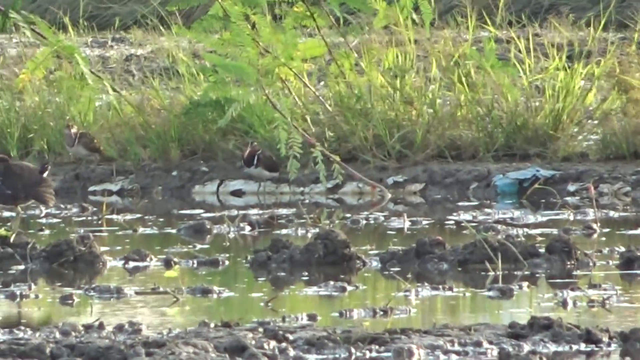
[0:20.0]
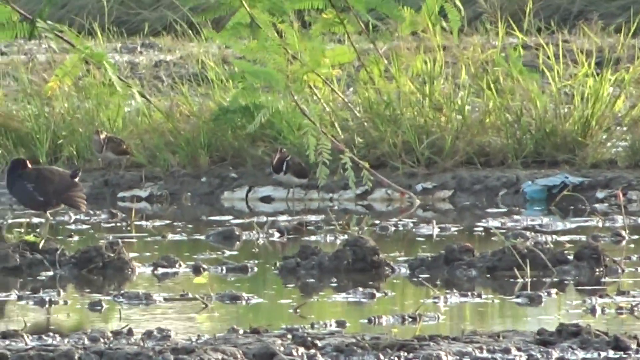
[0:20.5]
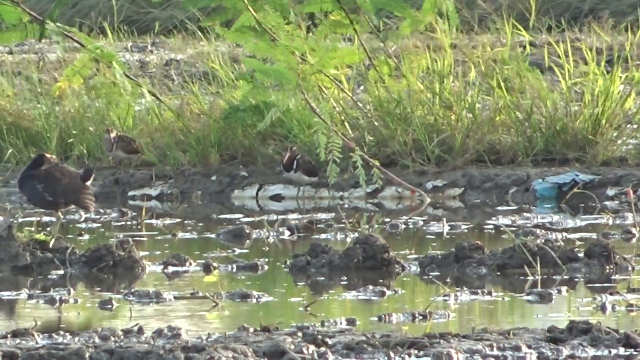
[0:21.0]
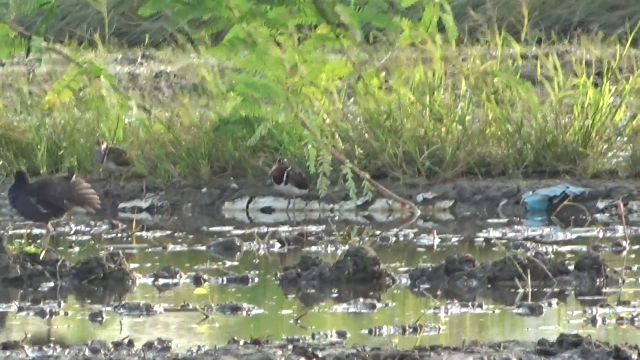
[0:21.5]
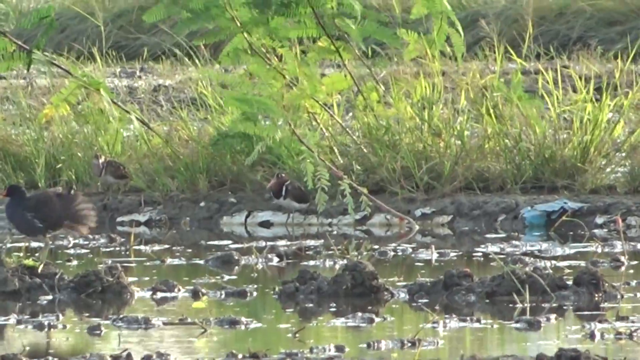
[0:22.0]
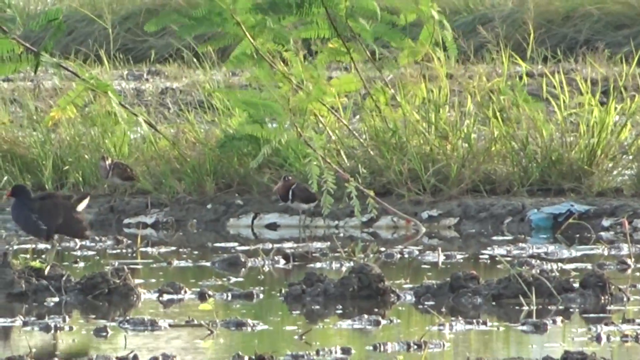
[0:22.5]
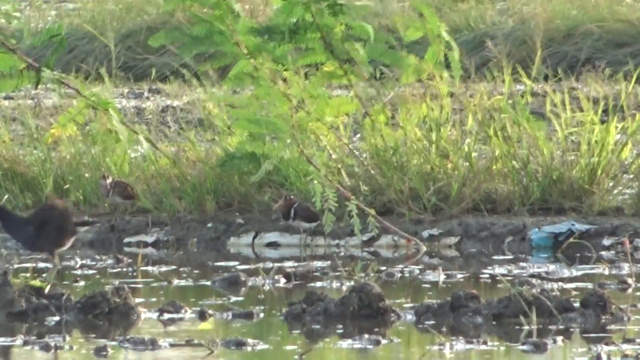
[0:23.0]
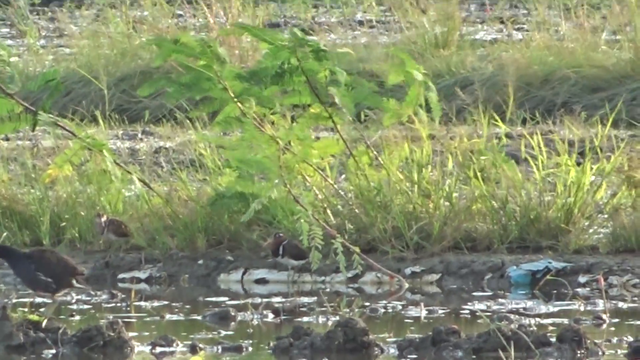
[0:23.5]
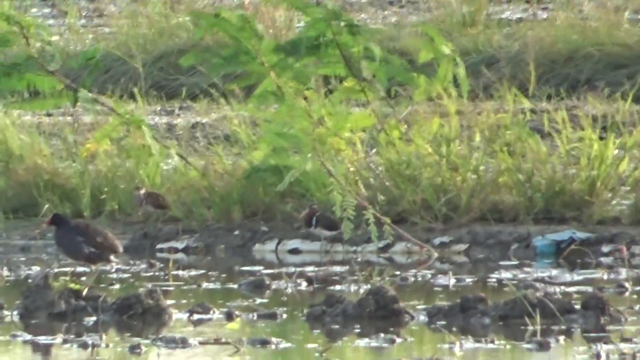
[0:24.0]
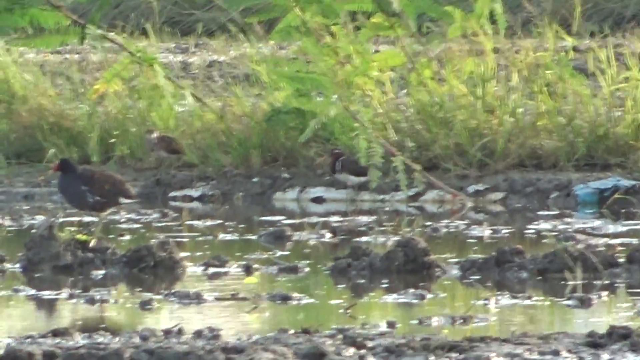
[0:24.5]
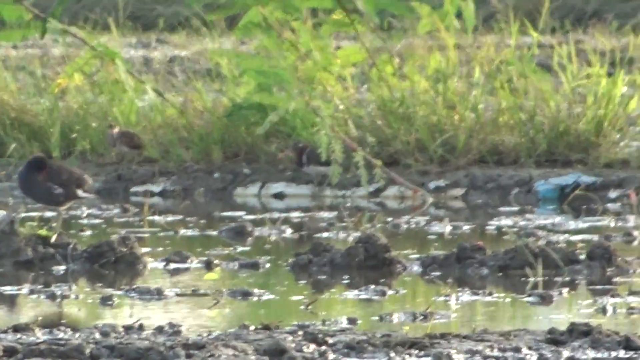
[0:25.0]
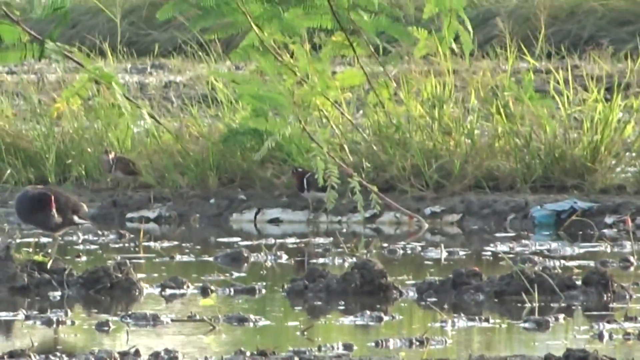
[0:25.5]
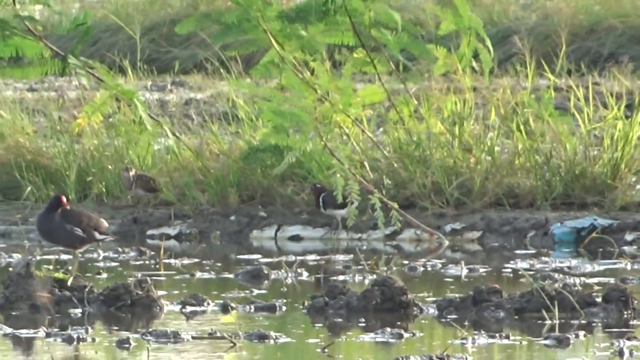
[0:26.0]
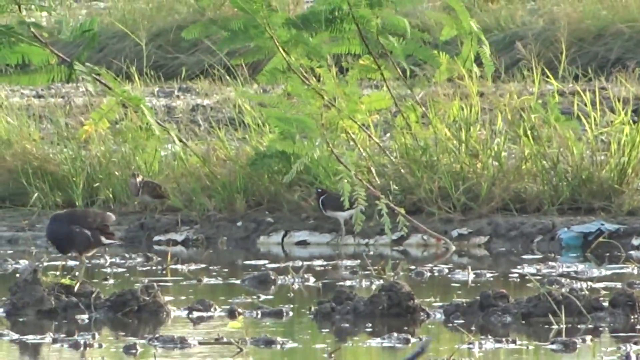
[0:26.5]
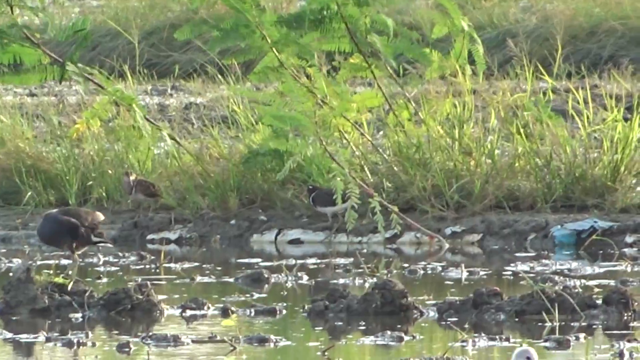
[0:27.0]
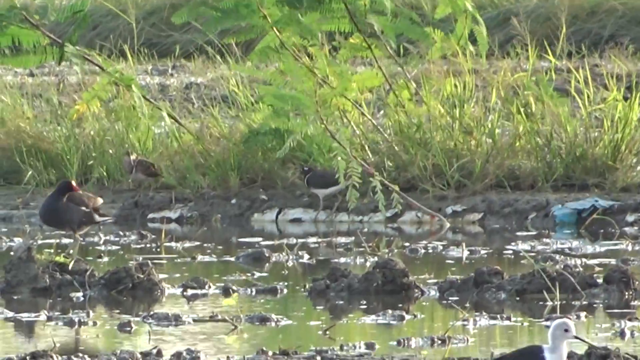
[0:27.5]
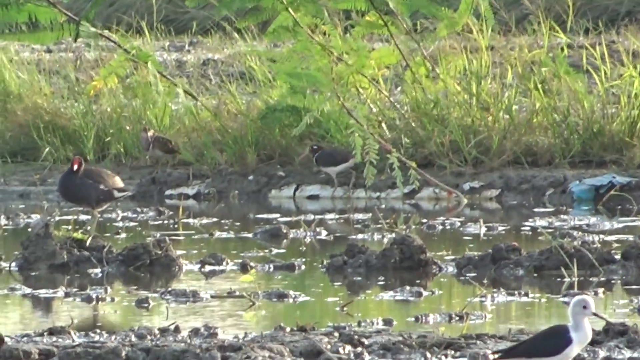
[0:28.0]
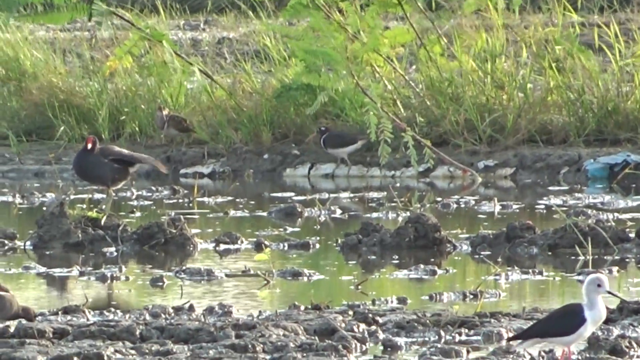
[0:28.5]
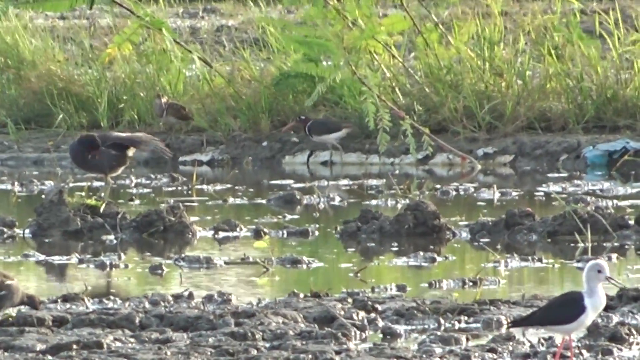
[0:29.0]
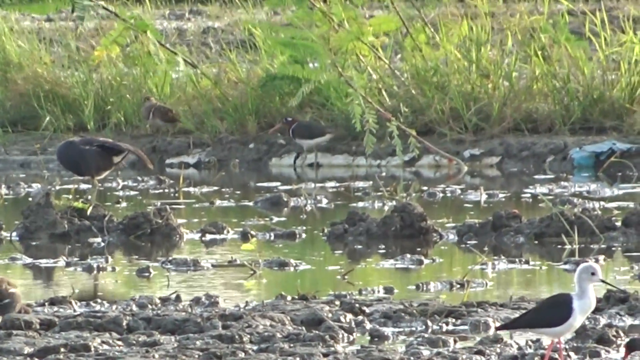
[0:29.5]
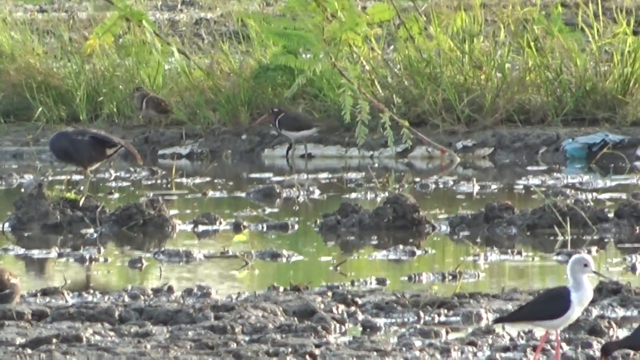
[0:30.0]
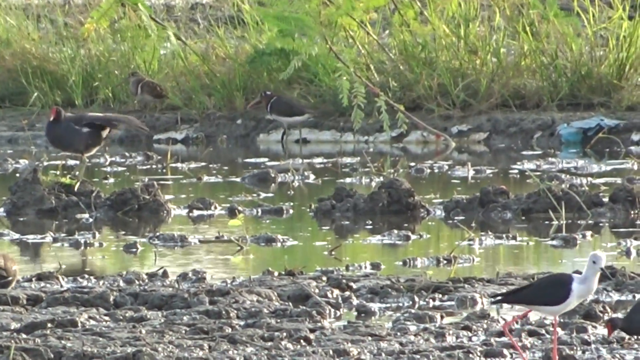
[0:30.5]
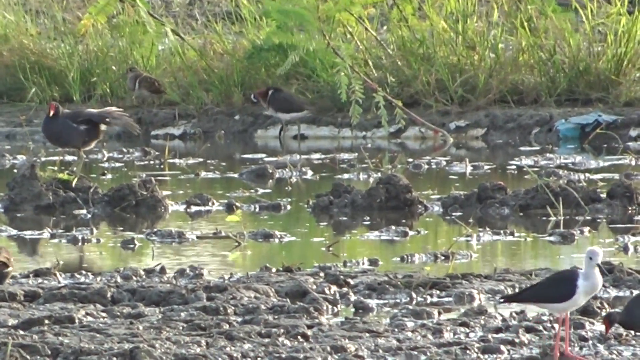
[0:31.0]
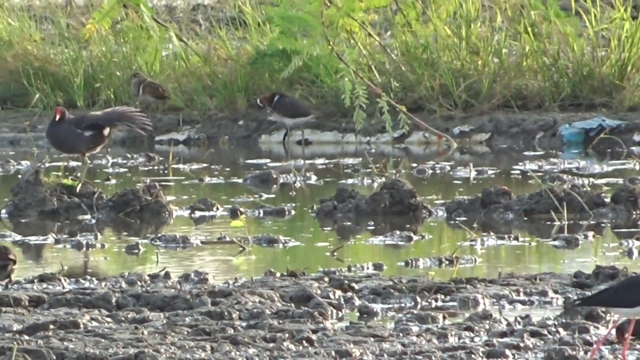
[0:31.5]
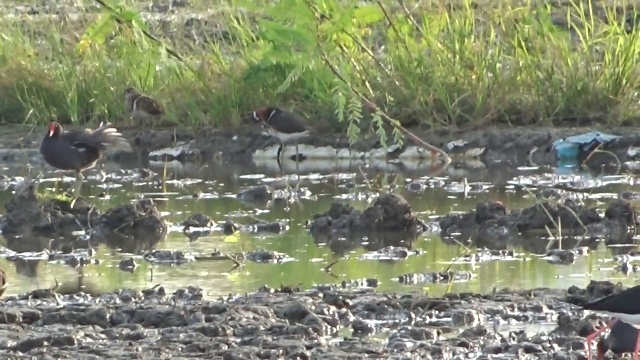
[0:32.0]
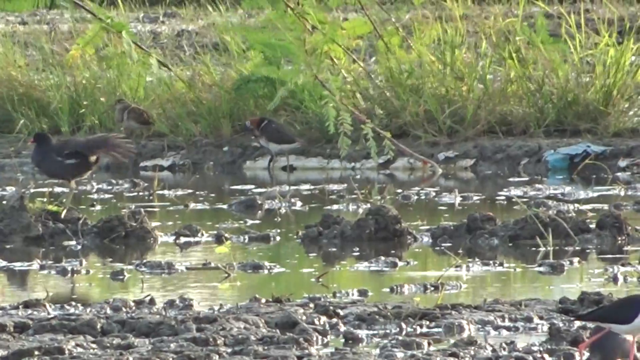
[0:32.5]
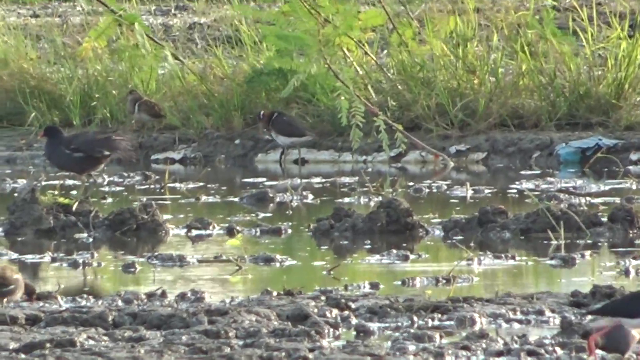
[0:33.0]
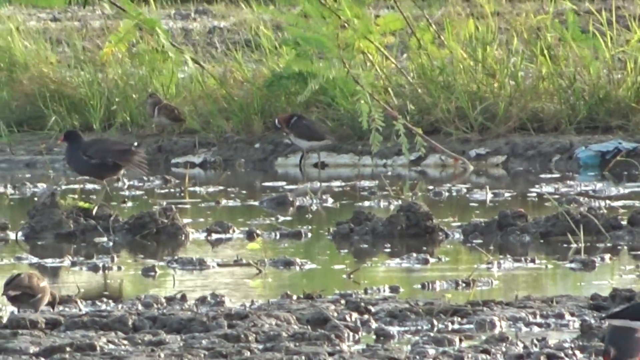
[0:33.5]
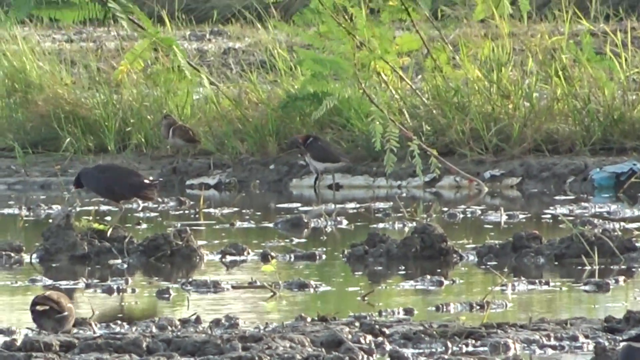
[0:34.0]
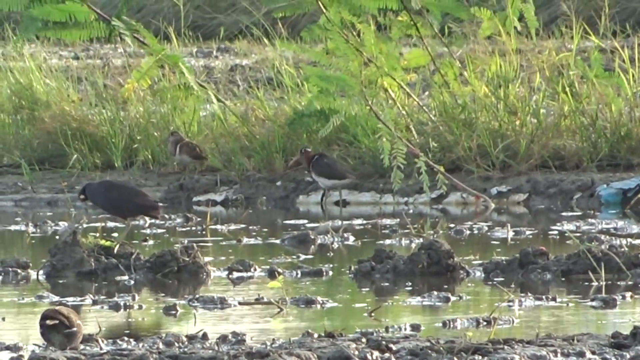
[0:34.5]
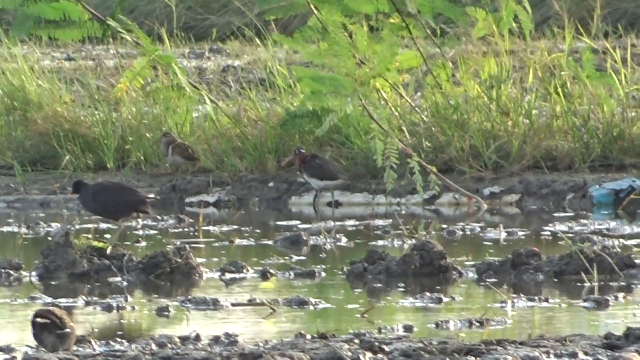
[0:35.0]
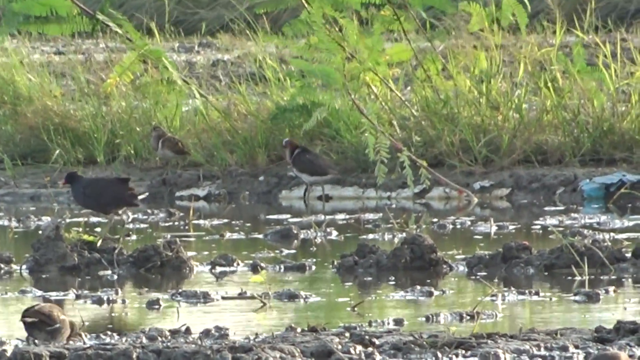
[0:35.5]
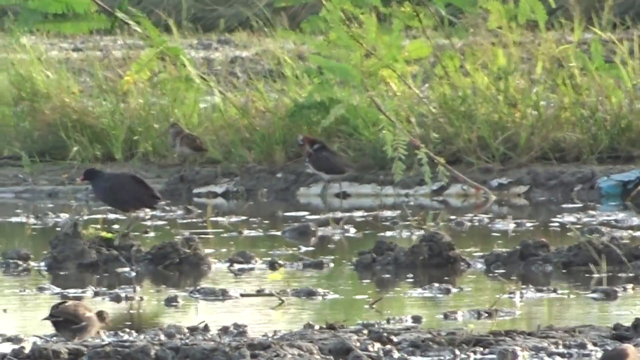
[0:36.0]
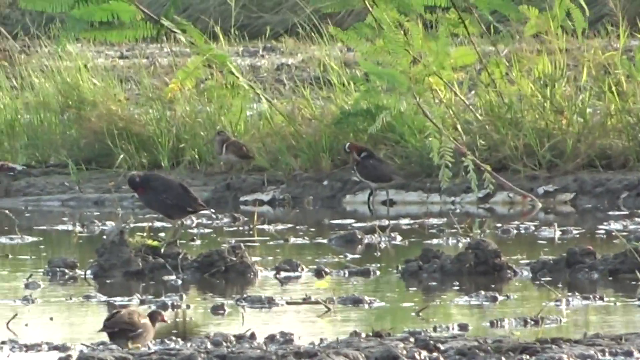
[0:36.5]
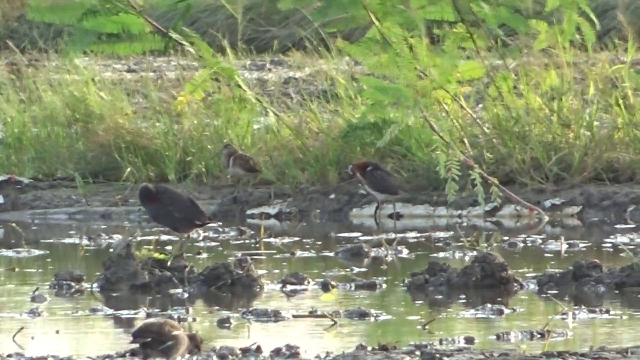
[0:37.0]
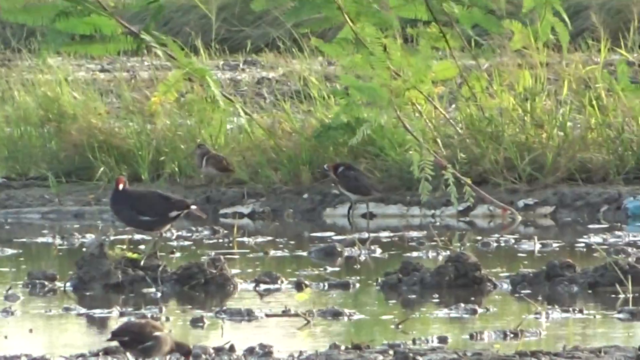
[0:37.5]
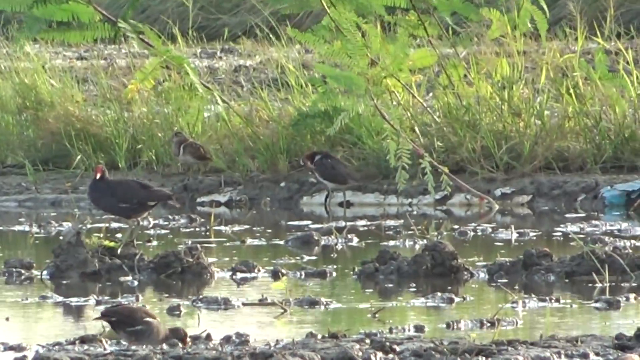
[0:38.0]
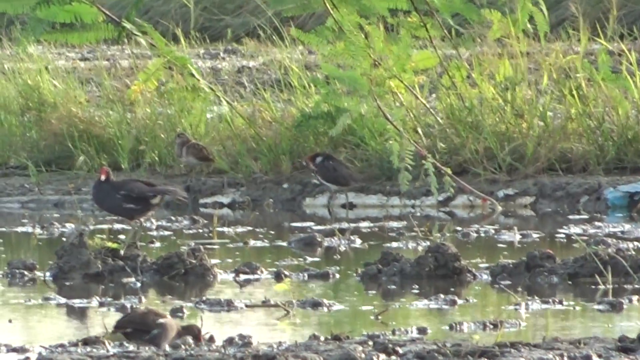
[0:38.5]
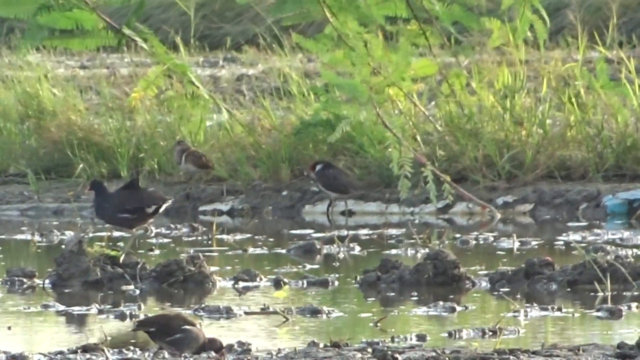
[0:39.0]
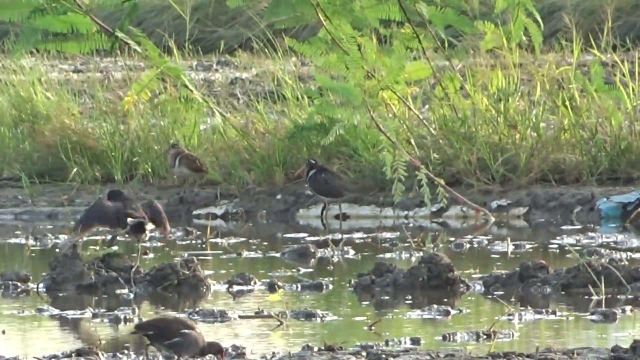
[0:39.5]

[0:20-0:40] Several birds are in a swampland area with lots of green shrubbery, twigs and dead grass. A blue trash bag is in the water, and the water ripples. There is lots of mud. One bird flies down; it has a white face, a long black beak, black wings, a white head and breast, and orange legs. It walks in the muddy area next to another bird. The other birds are more or less pecking at their feathers. The bird that was in the middle of the swampland area starts to fly away to a different area, flapping its wings and moving toward the right. Little pieces of grass stick out throughout the water. Some of the birds walk on the perimeter; they have long, skinny legs.